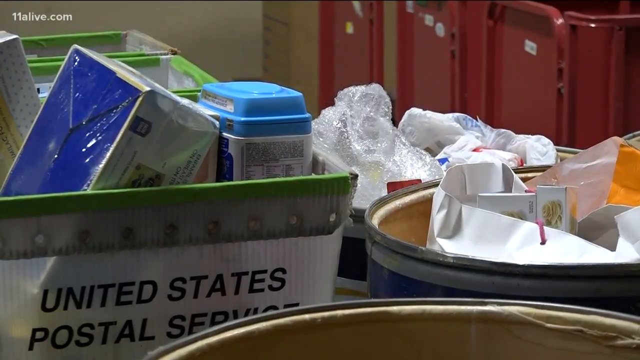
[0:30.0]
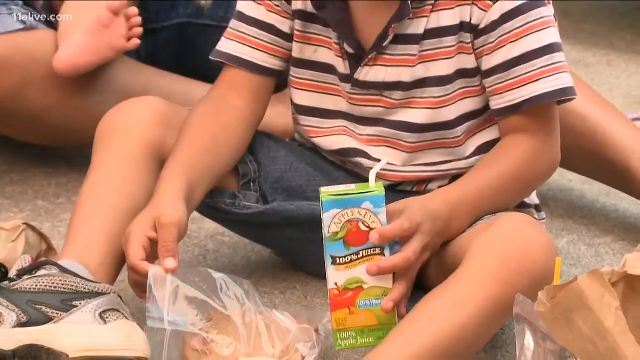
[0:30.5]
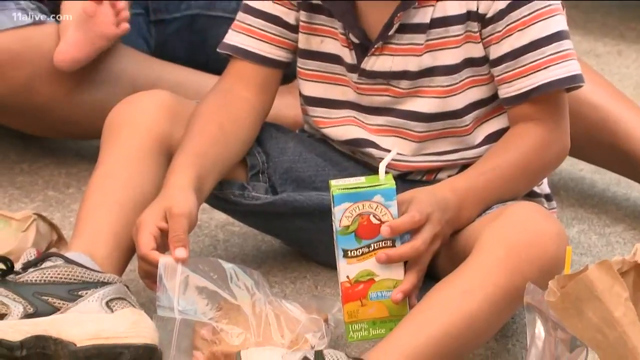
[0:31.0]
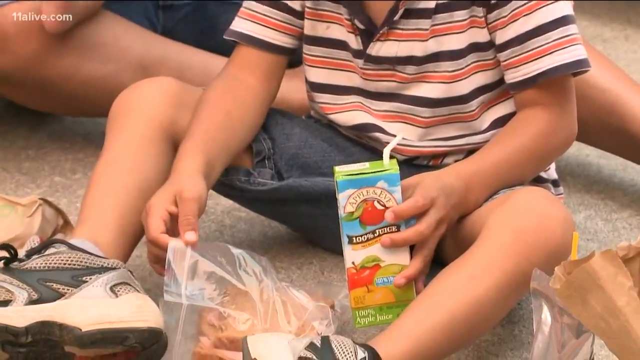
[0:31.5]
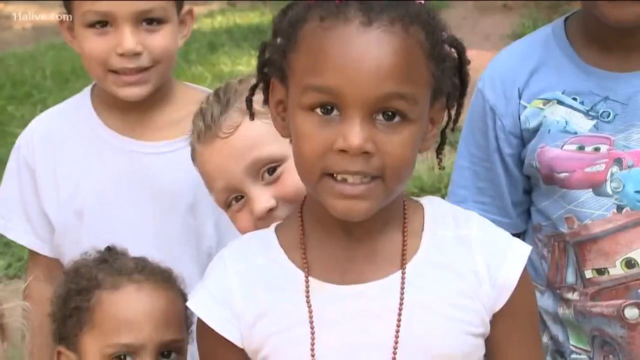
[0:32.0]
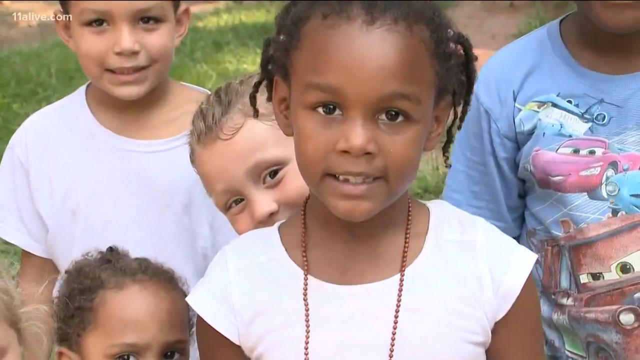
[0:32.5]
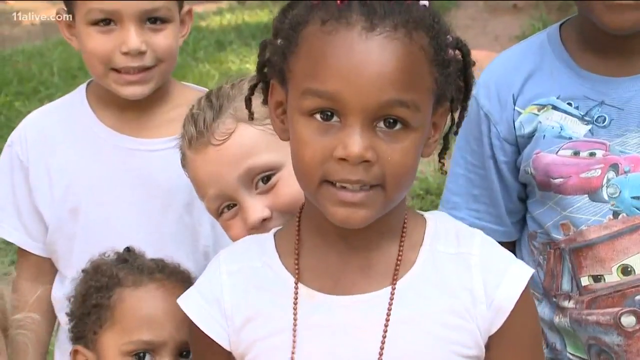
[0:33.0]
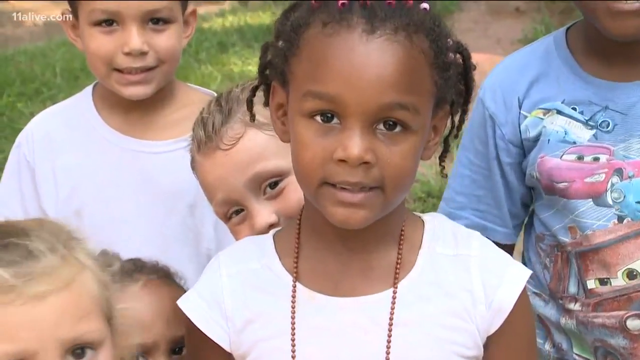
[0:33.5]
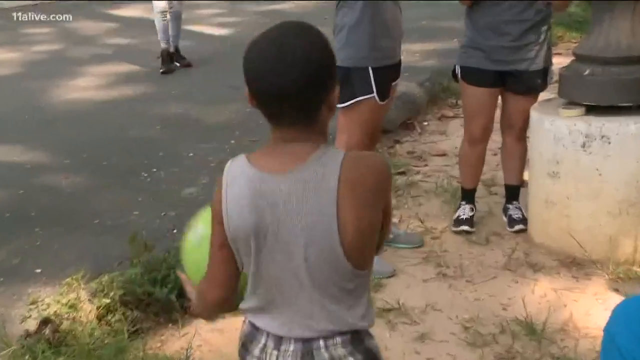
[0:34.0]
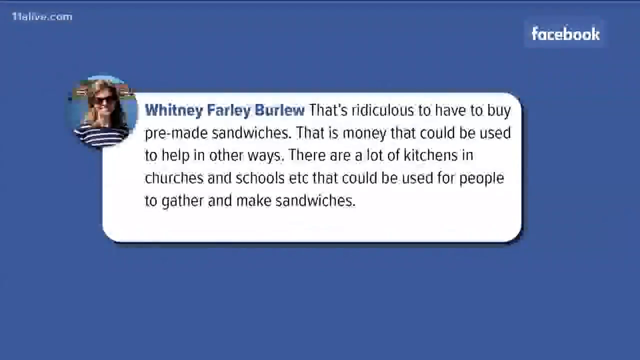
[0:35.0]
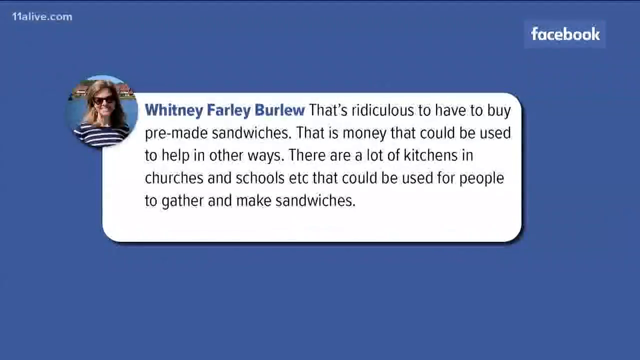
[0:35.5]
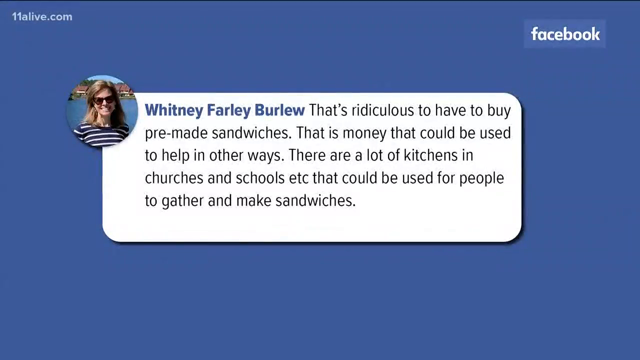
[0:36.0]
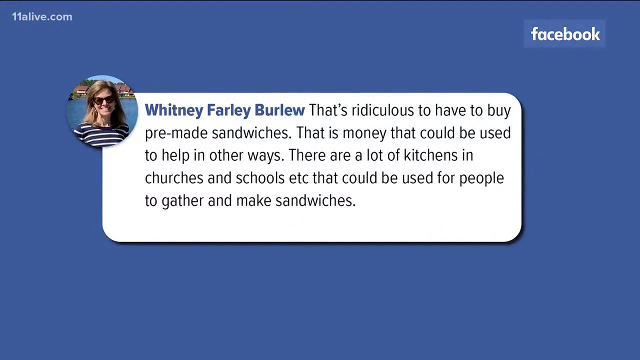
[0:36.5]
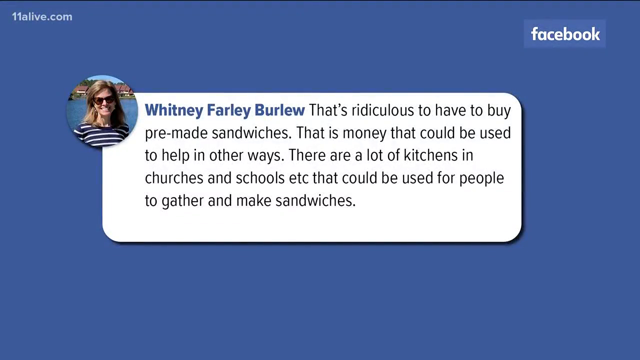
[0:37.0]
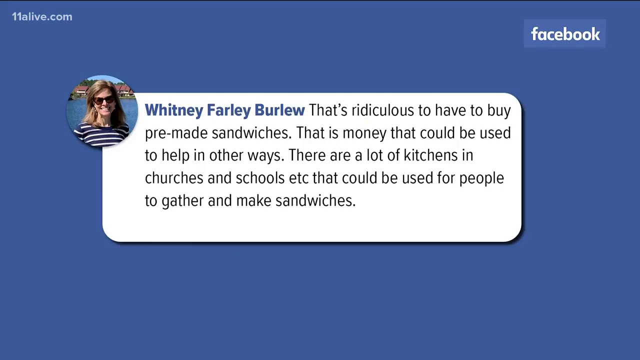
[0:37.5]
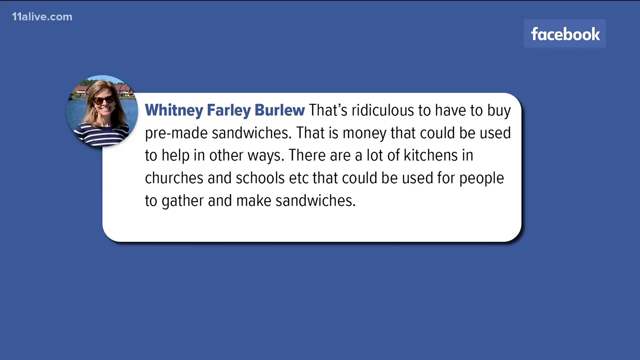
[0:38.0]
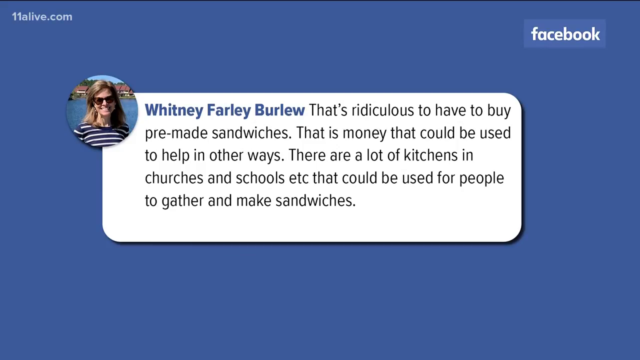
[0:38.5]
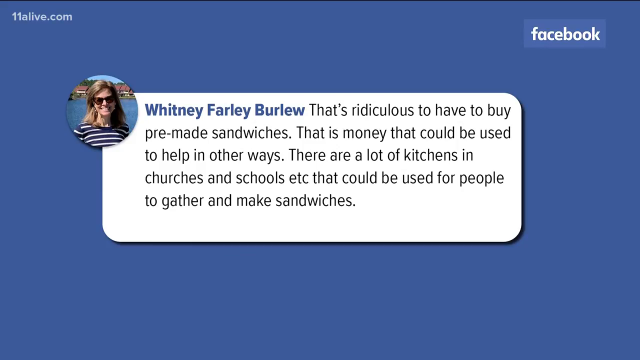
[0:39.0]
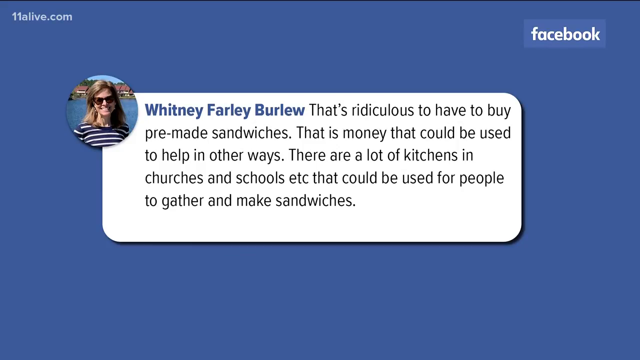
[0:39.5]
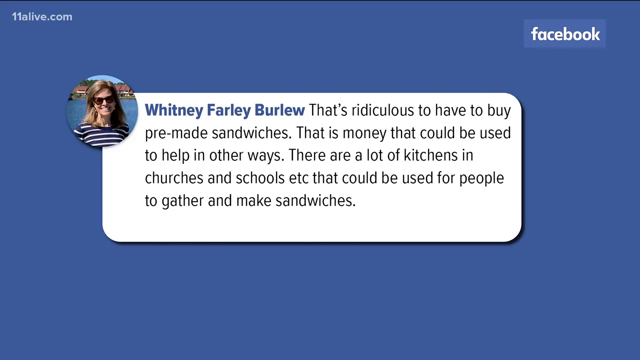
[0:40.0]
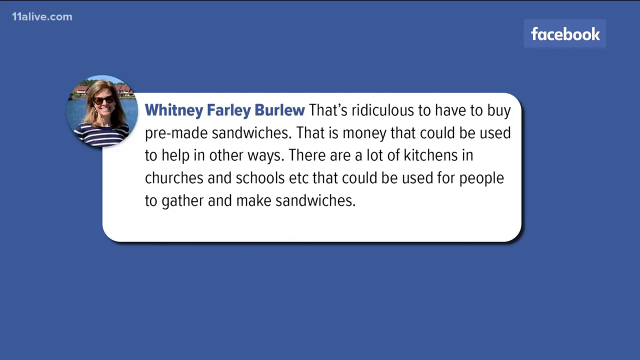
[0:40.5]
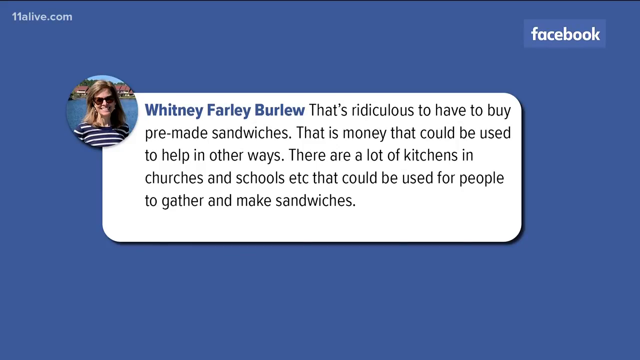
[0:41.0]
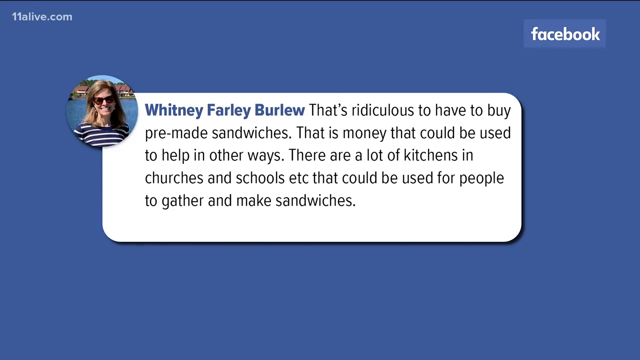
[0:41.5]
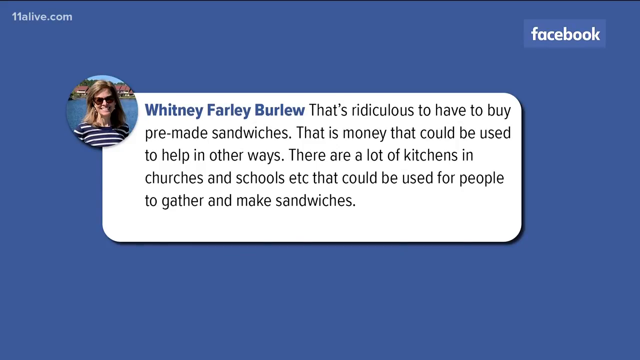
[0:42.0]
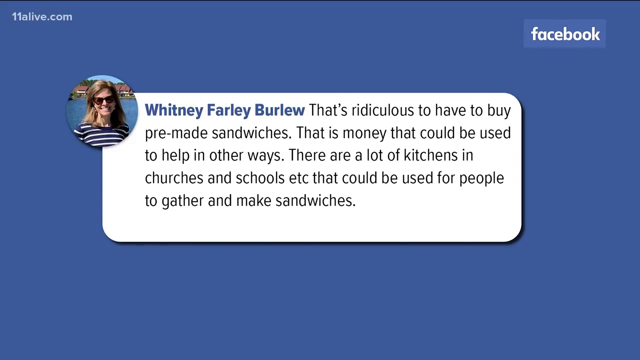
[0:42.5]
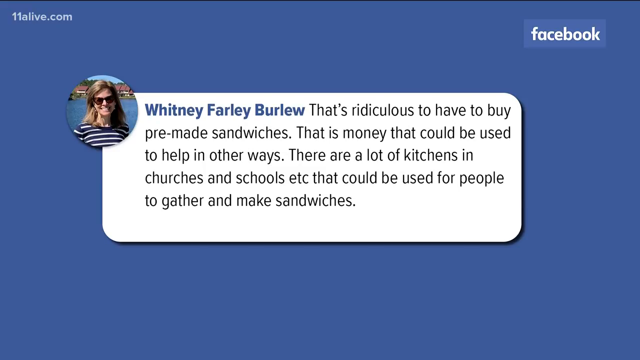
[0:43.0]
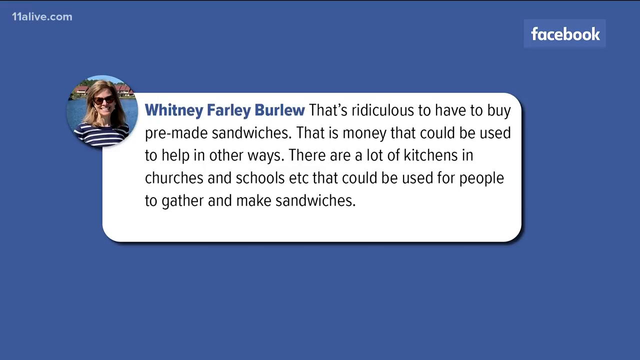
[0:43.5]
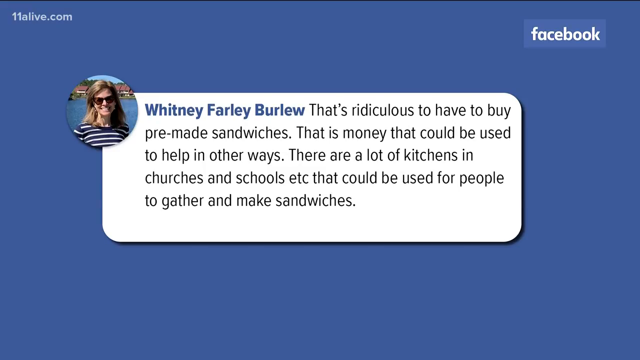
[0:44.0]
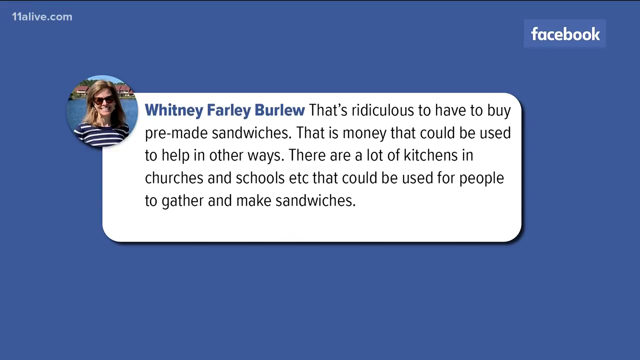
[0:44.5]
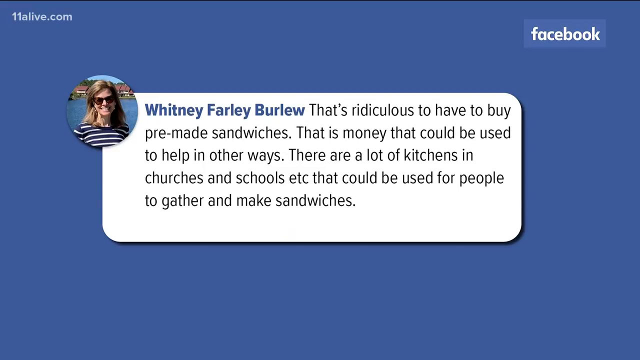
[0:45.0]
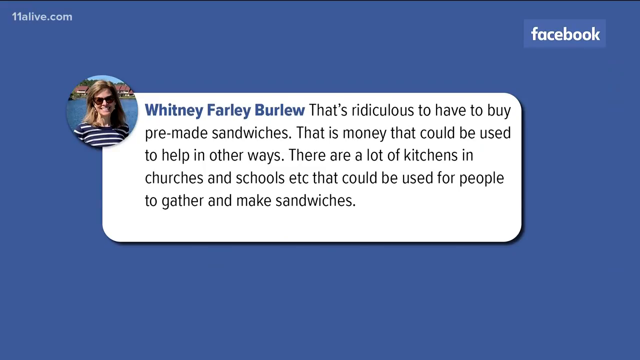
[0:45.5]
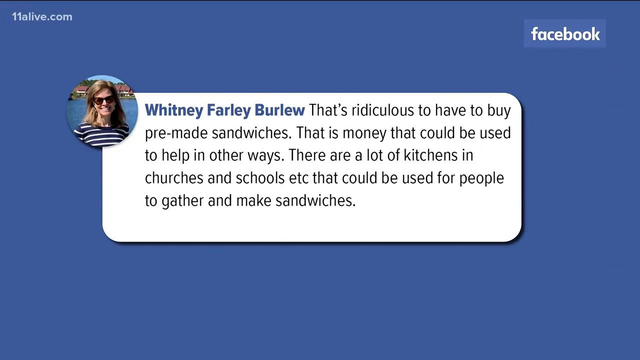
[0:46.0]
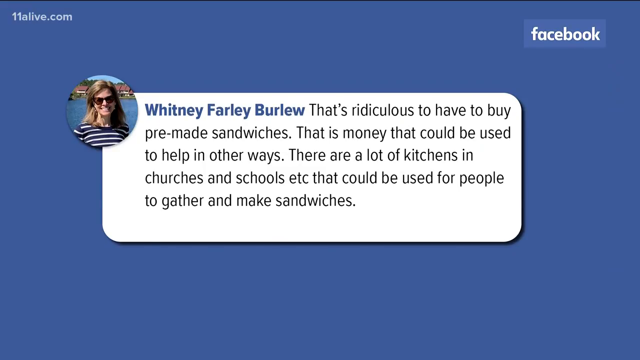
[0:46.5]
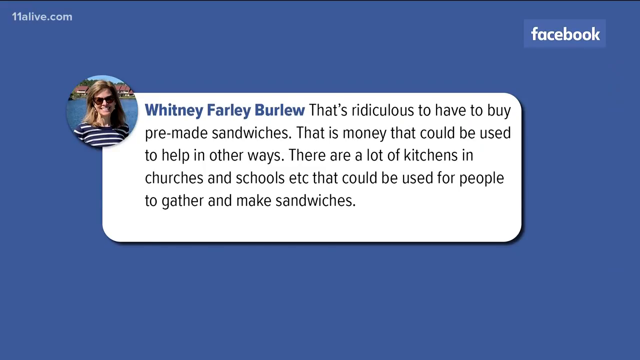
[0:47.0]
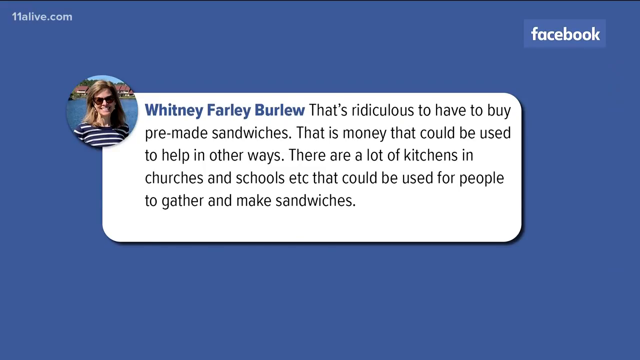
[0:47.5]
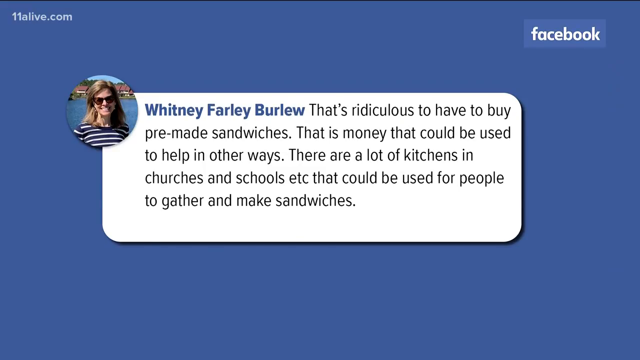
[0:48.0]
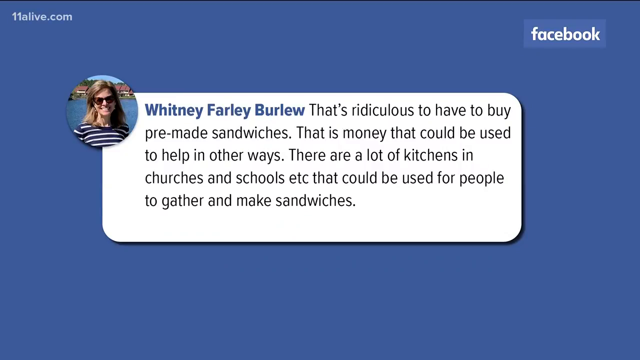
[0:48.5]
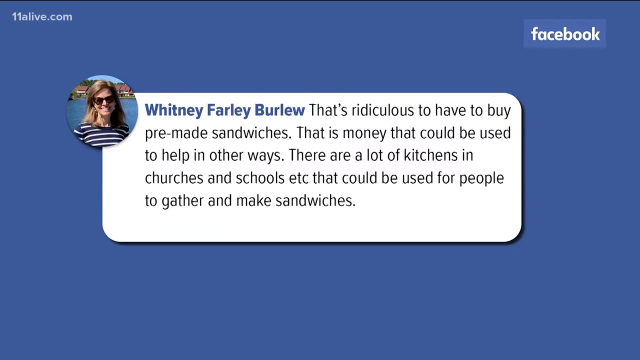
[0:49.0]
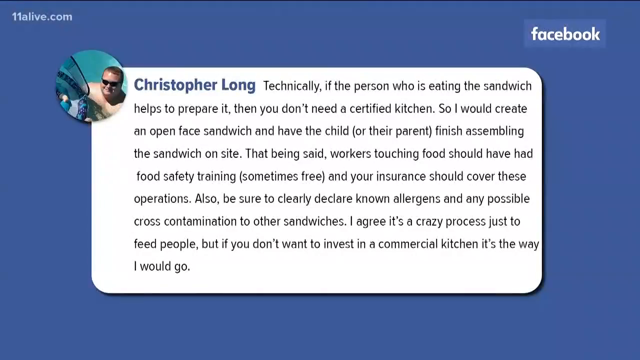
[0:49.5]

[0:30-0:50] Lots of food is being delivered by the United States Postal Service, including Capri Sun juices, cheese and crackers, peanut butter crackers and other juices. A comment by Whitney Farley-Berlew follows, reading that it is ridiculous to have to search for pre-made sandwiches, that this is money that could be used to help in other ways, and that there are a lot of kitchens in churches and schools that could be used for people to gather and make sandwiches.